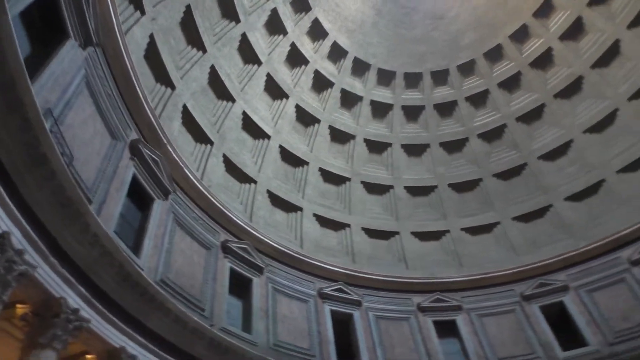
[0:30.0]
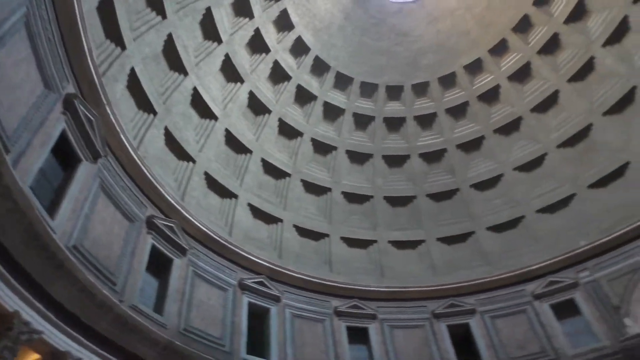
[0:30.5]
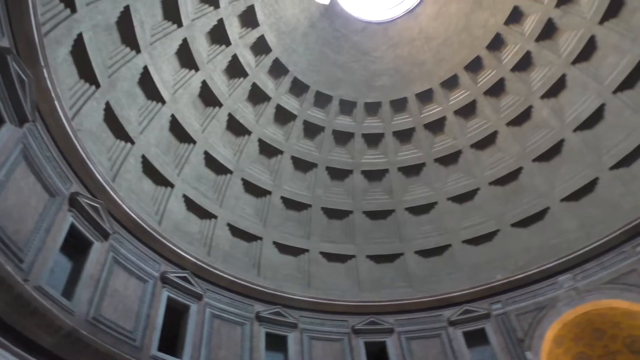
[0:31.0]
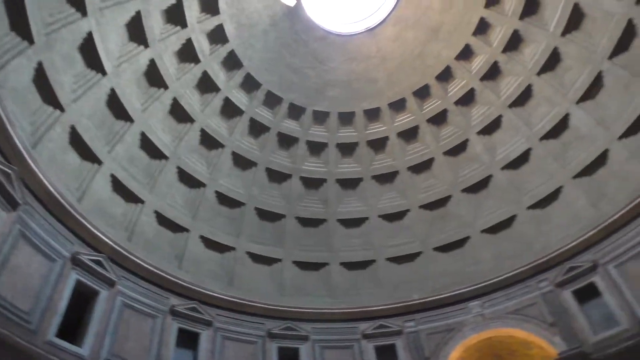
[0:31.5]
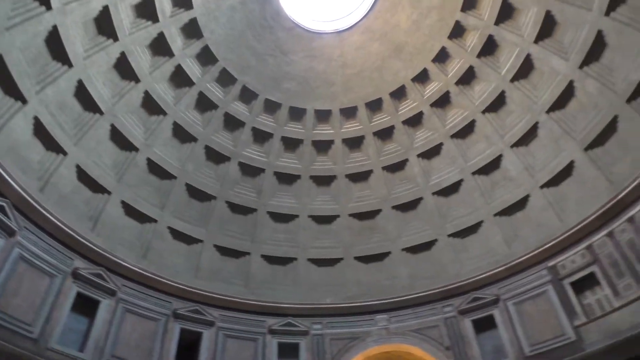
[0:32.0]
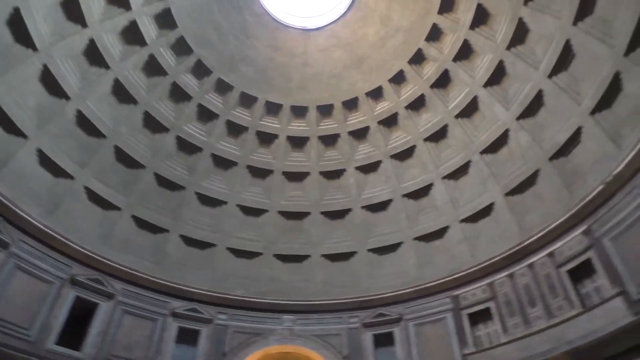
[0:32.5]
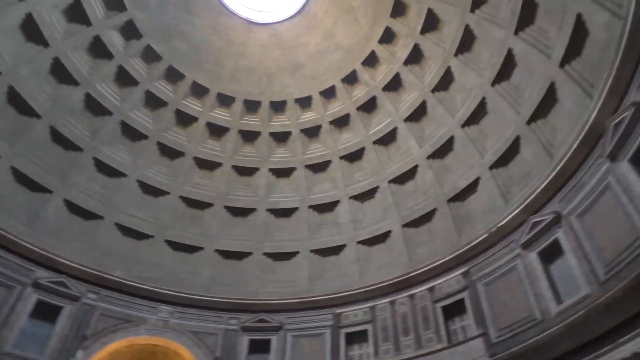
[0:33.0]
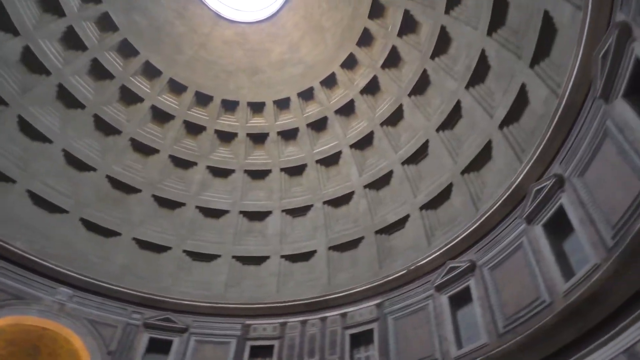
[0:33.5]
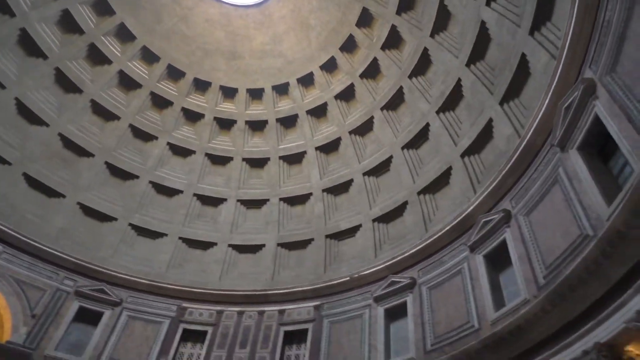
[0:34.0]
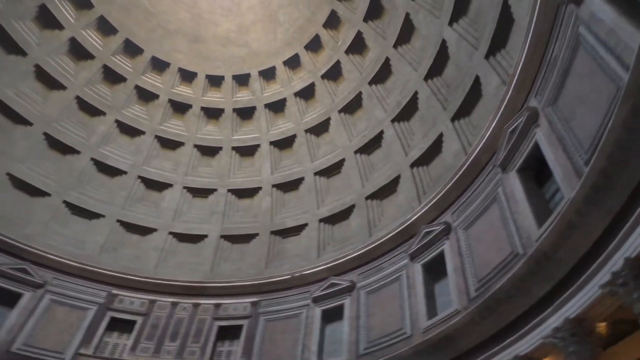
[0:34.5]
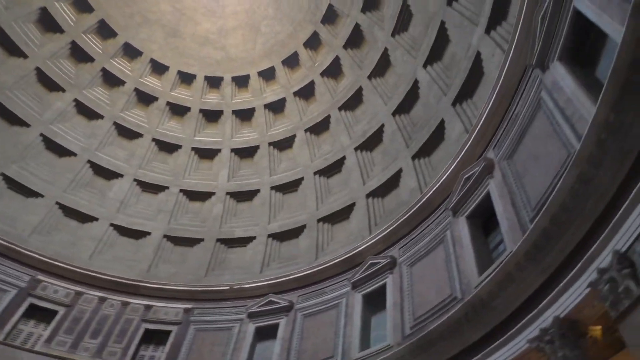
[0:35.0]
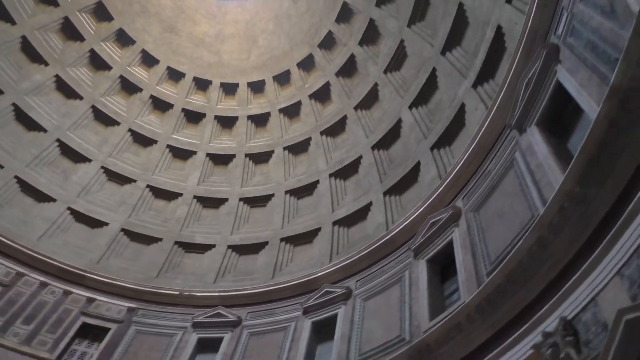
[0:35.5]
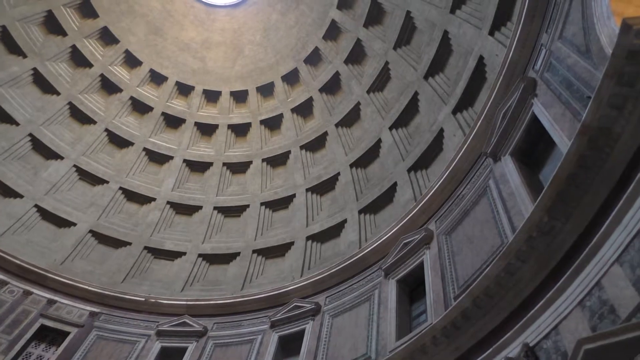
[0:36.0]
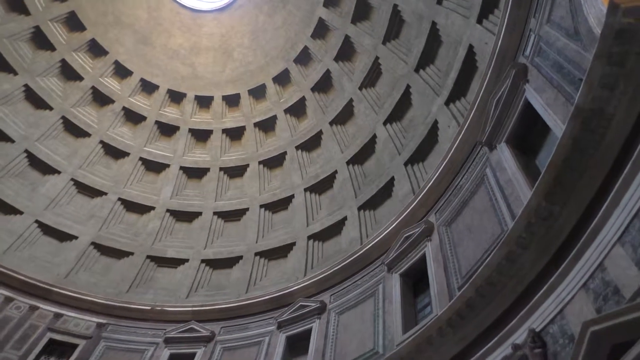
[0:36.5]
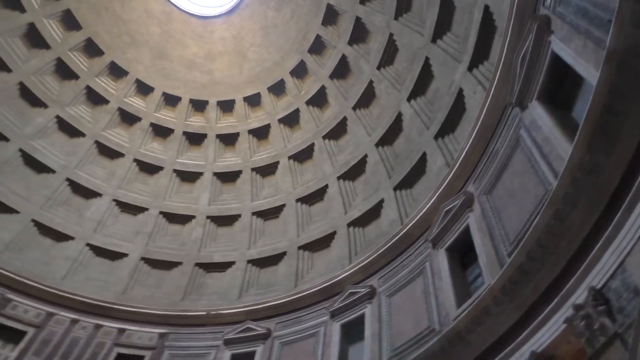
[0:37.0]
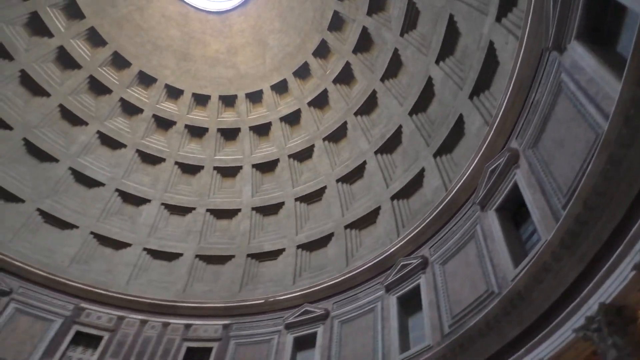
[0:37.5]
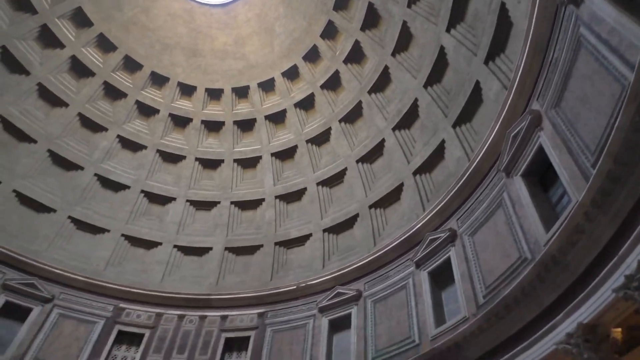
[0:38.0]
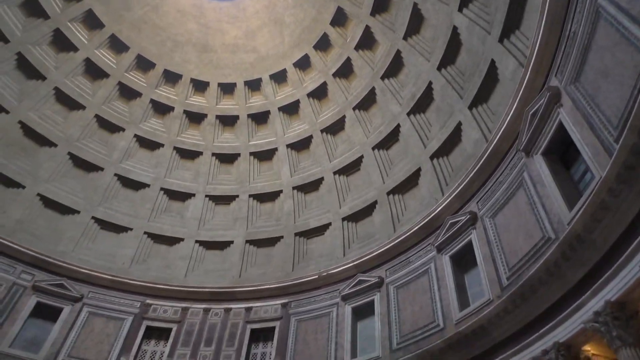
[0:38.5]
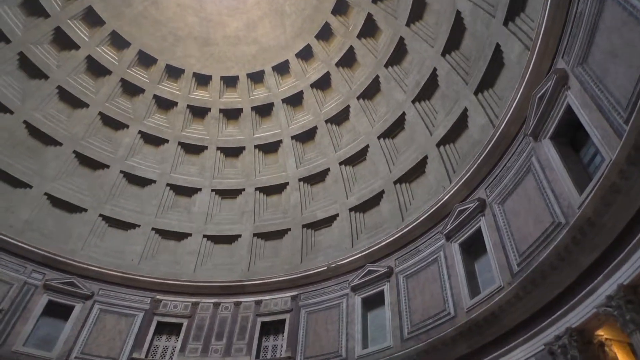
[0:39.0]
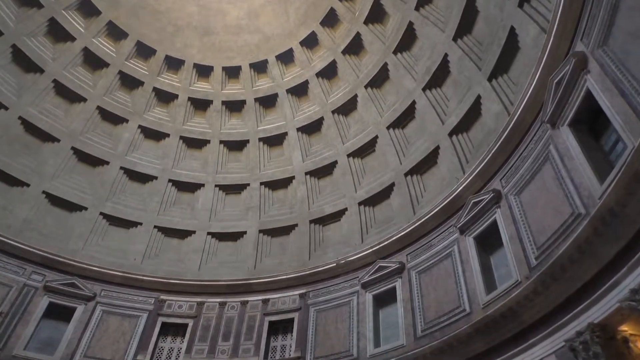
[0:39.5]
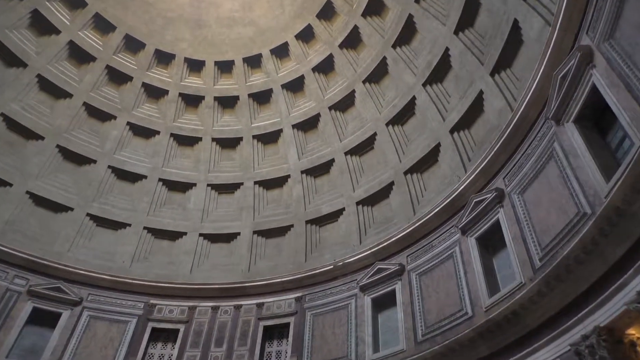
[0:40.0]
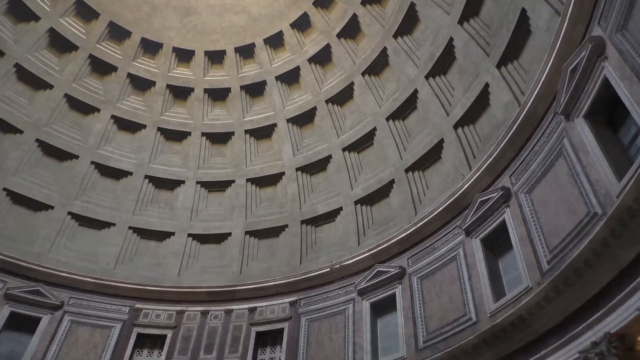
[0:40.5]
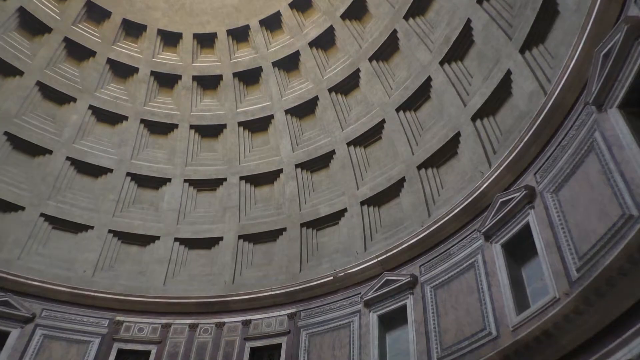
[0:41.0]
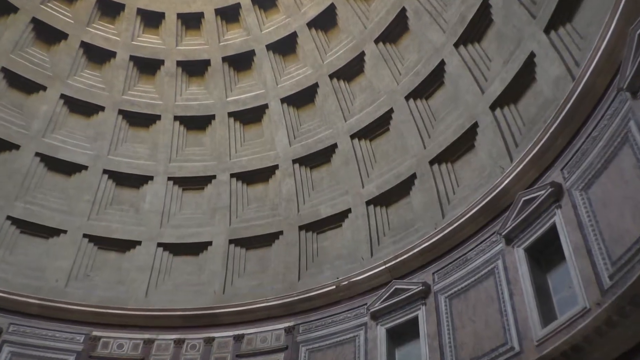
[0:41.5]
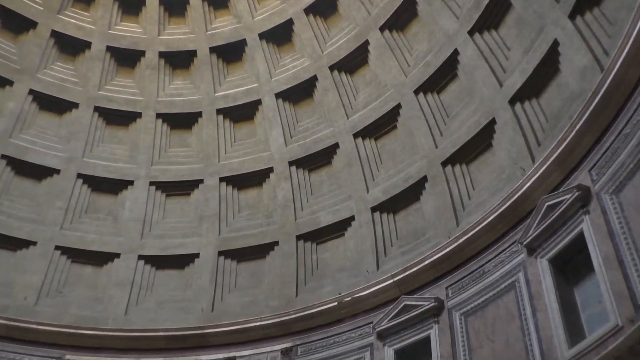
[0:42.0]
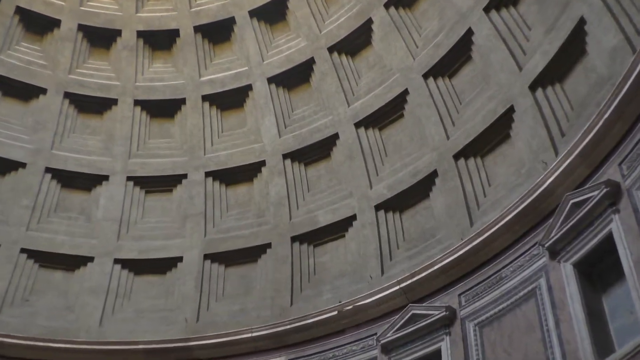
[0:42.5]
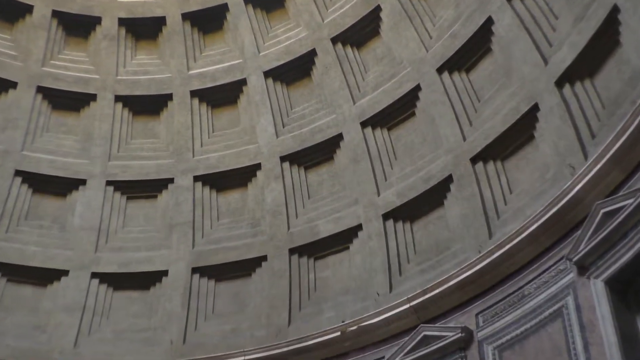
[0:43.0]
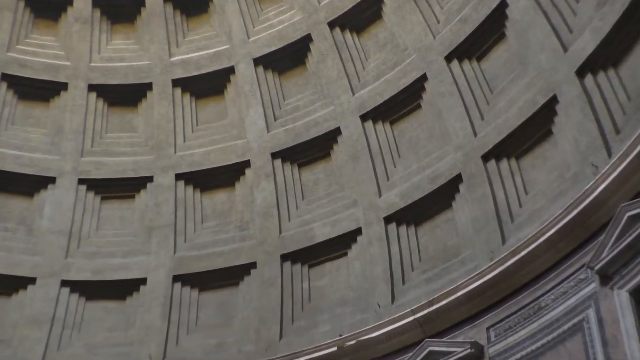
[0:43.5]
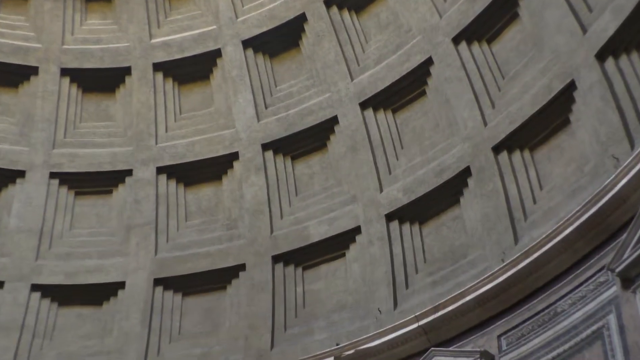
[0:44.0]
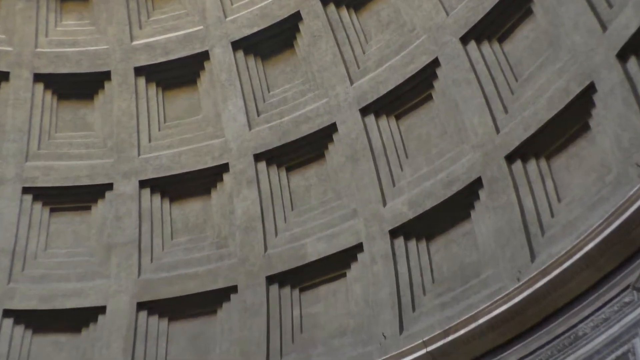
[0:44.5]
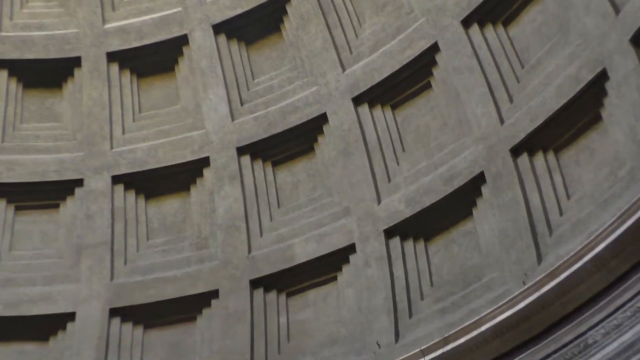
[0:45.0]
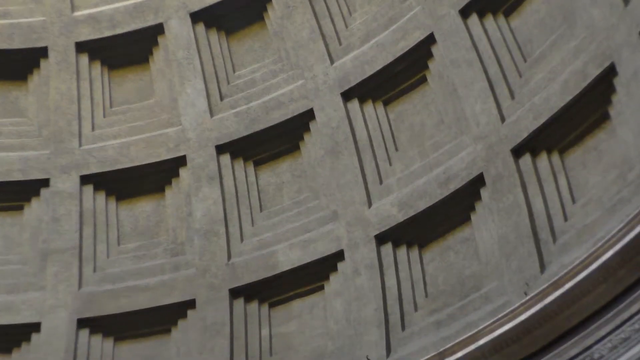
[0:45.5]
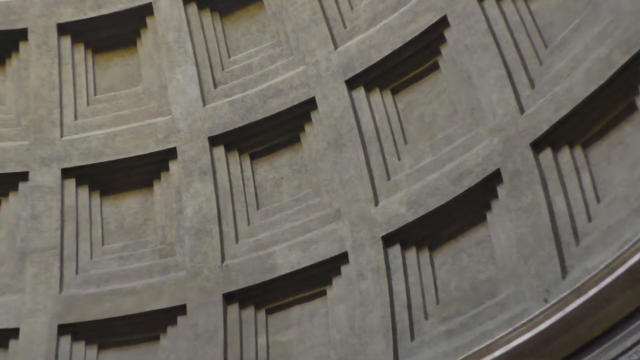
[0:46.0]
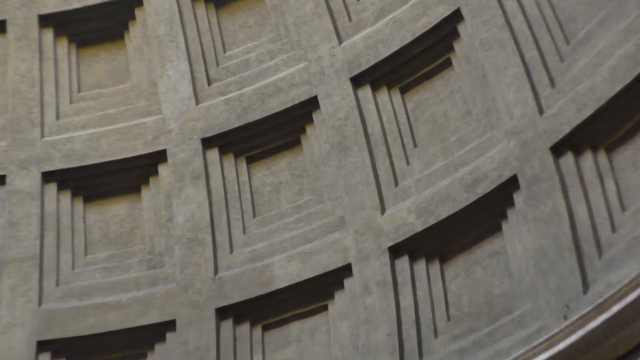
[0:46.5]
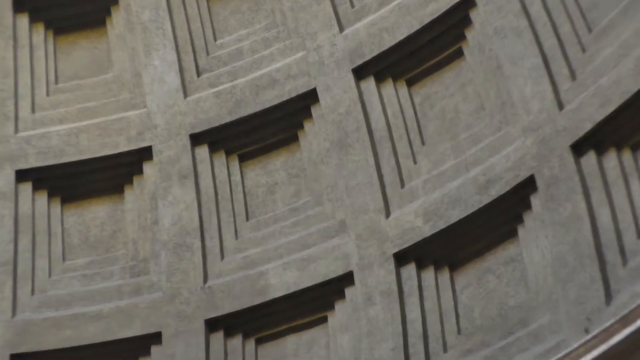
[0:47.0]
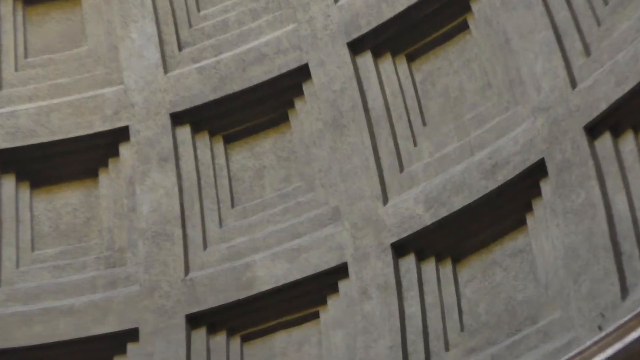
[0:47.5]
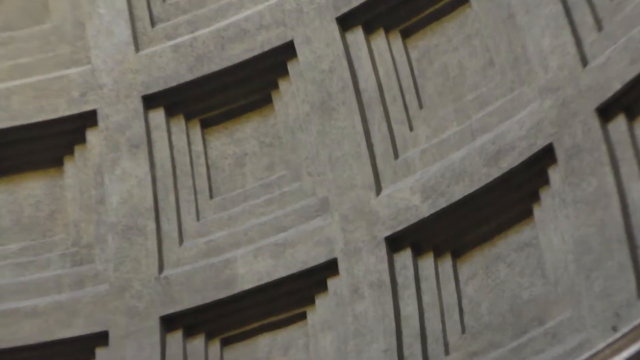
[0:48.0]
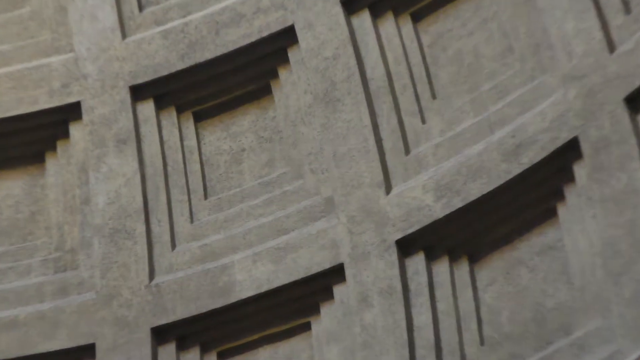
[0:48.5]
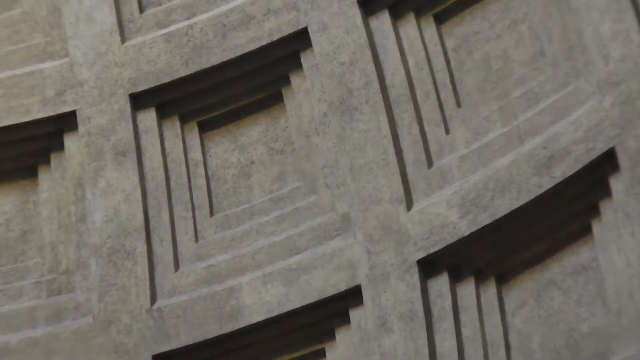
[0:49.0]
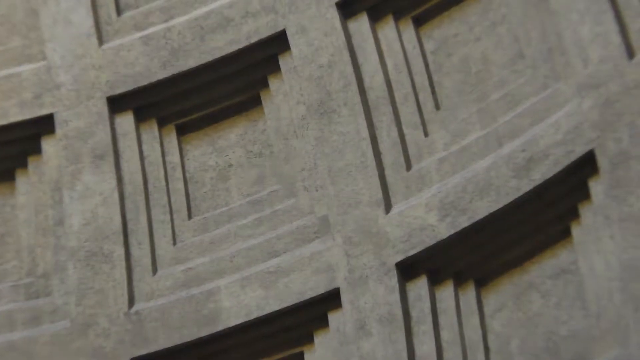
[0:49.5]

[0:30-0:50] The camera pans right, gradually speeding up until the shape of the red squares begins to blur. The same pattern continues to appear: squares in the dome and windows below, all with the same triangular outcropping above them. The camera pans right until it stops, then pans back to the left, showing the square engravings between the windows. It then begins zooming in on the dome structure, which is a somewhat olive color. The squares in the dome are in multiple layers, apparently about three or four; the central layer is smooth and steps upward into the outer layers. The camera keeps zooming in until their detail is fully shown, focusing on one of the lower layers, where the squares are somewhat large.